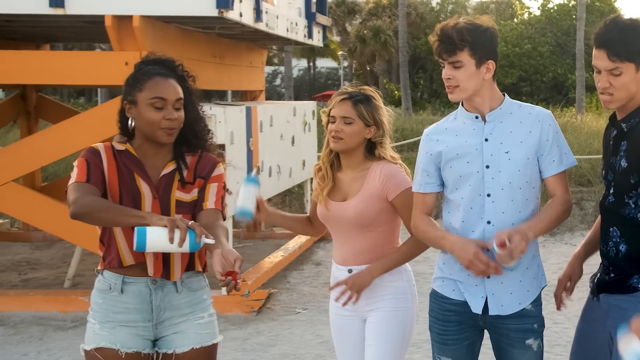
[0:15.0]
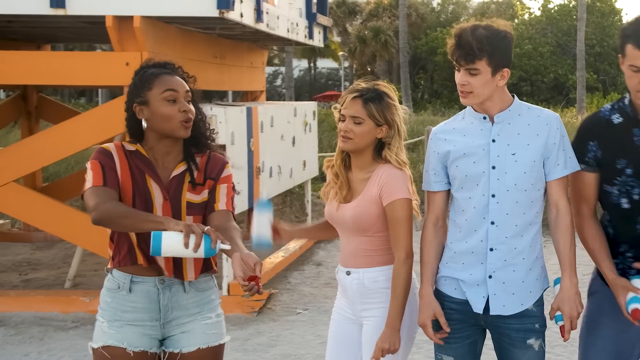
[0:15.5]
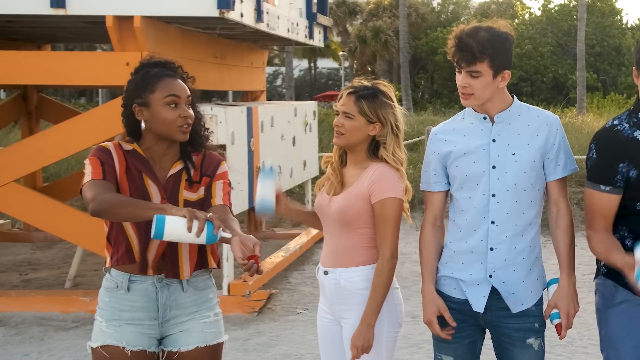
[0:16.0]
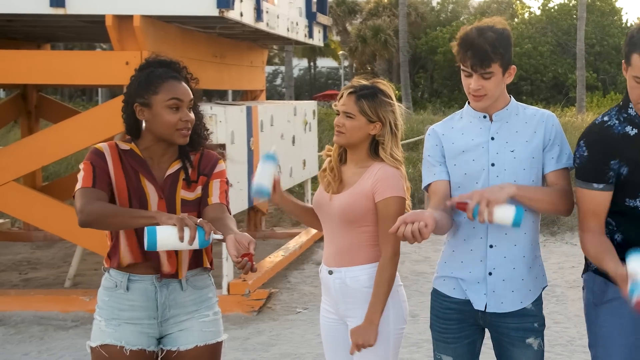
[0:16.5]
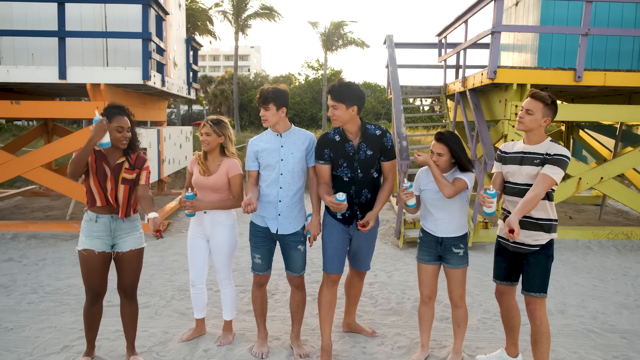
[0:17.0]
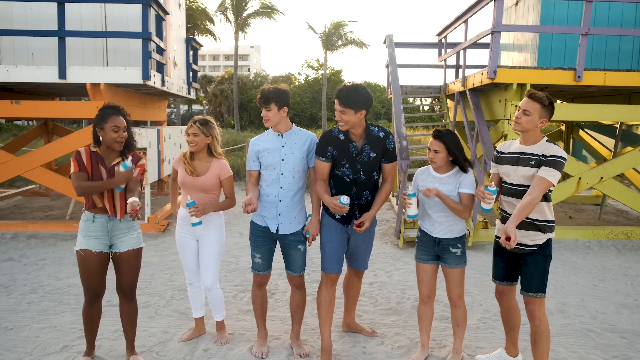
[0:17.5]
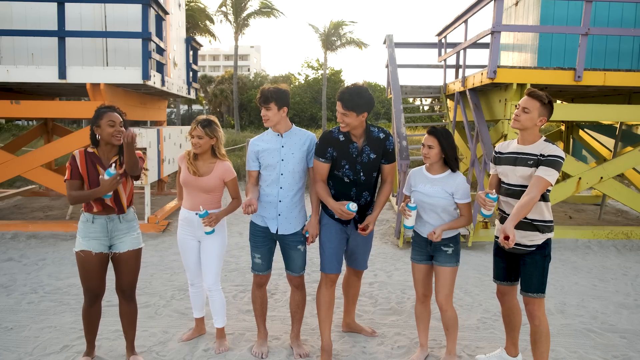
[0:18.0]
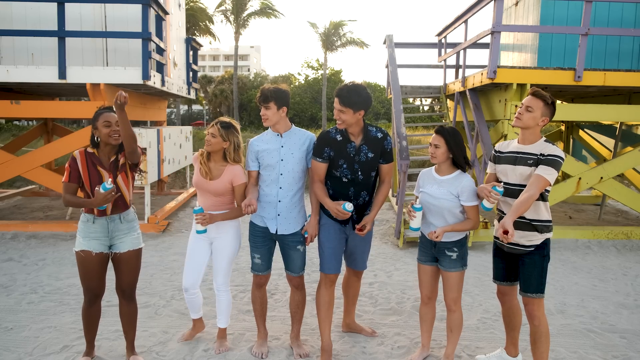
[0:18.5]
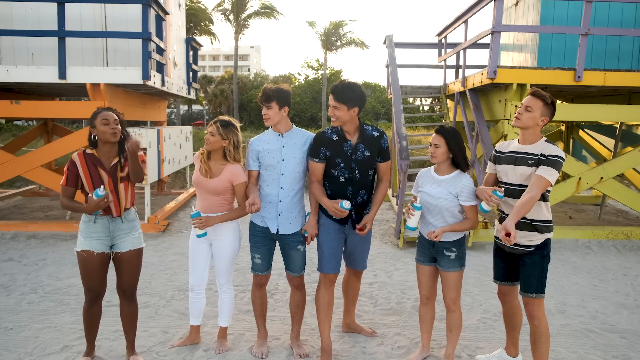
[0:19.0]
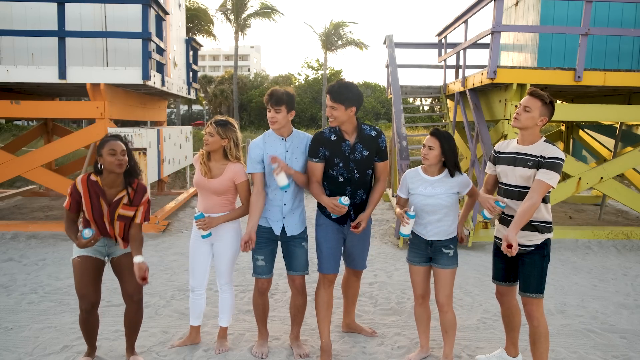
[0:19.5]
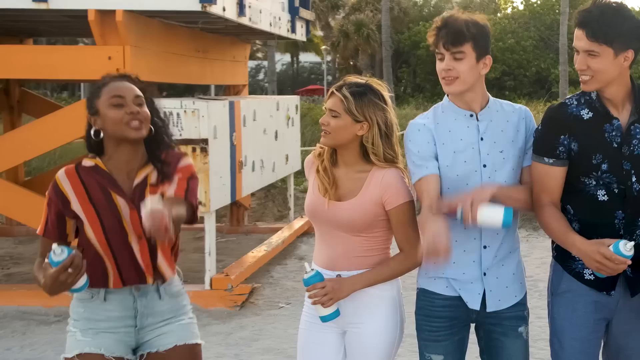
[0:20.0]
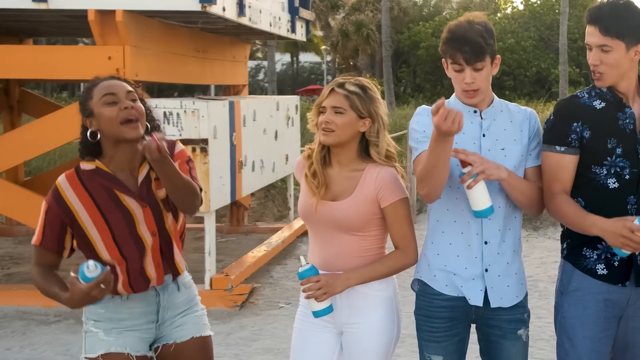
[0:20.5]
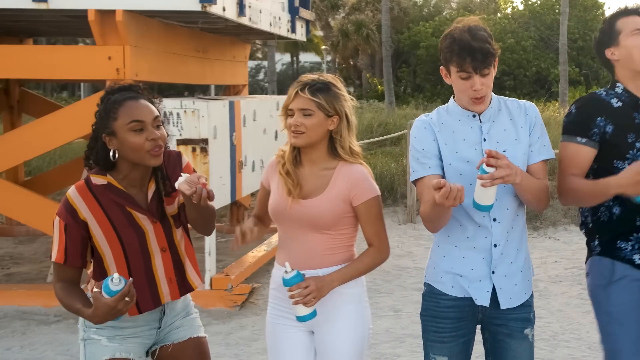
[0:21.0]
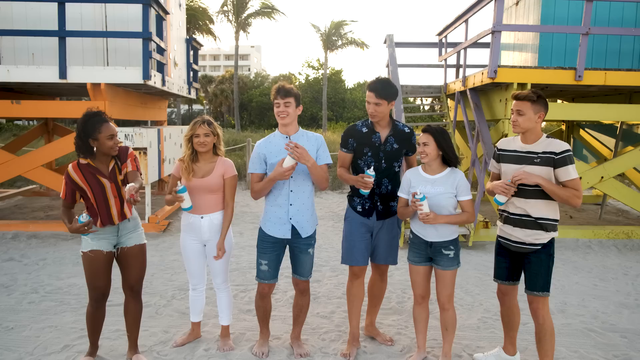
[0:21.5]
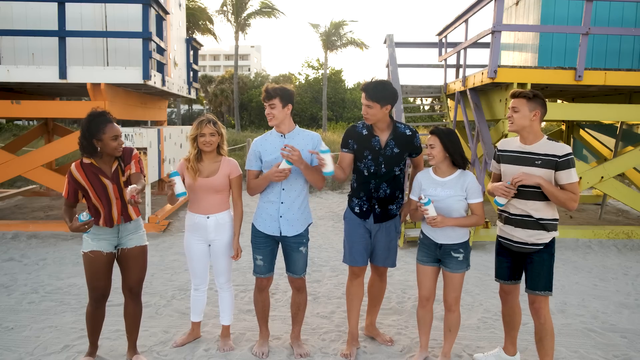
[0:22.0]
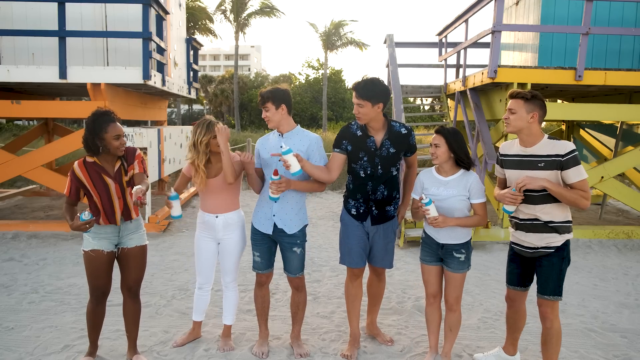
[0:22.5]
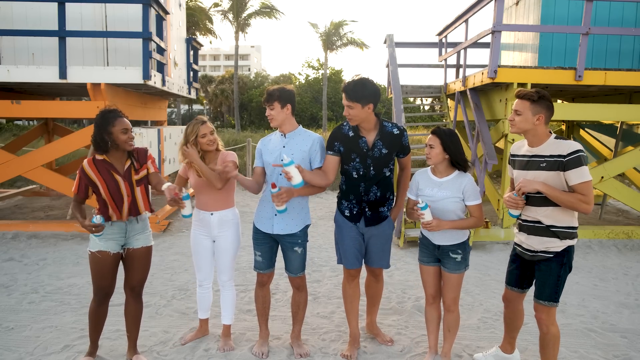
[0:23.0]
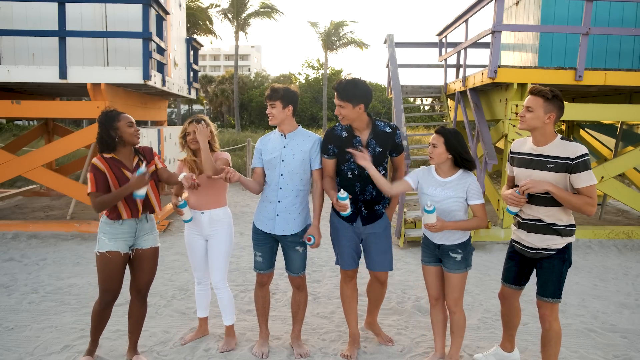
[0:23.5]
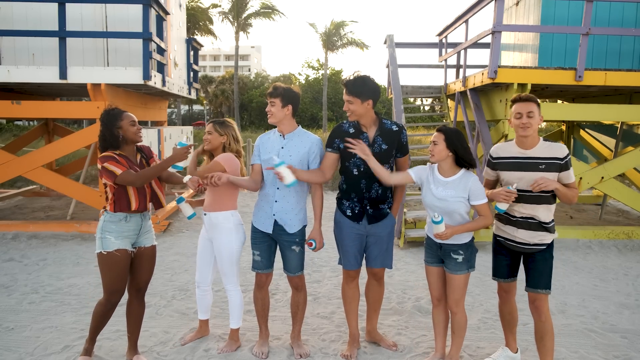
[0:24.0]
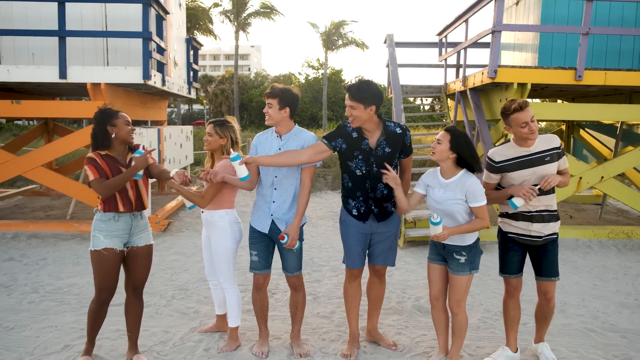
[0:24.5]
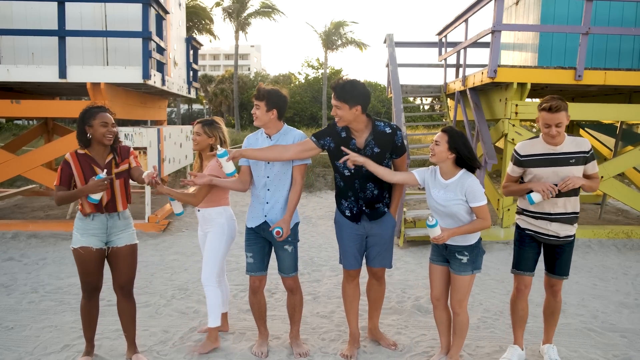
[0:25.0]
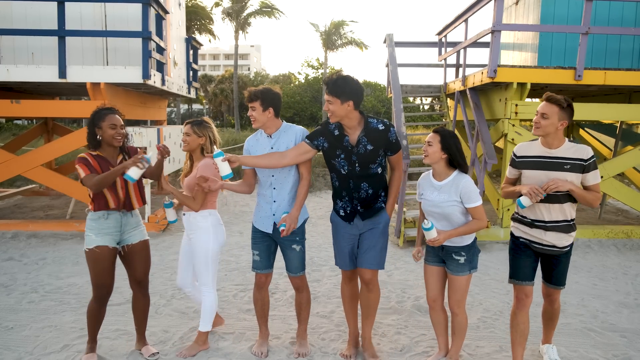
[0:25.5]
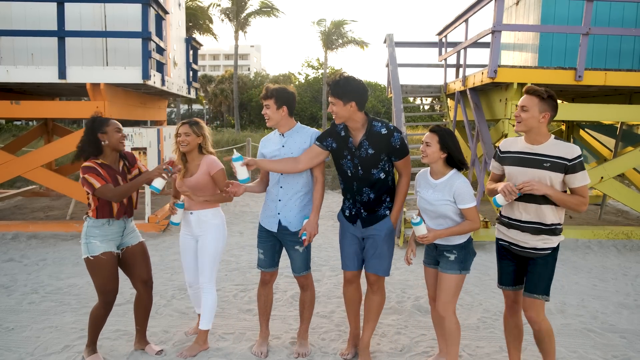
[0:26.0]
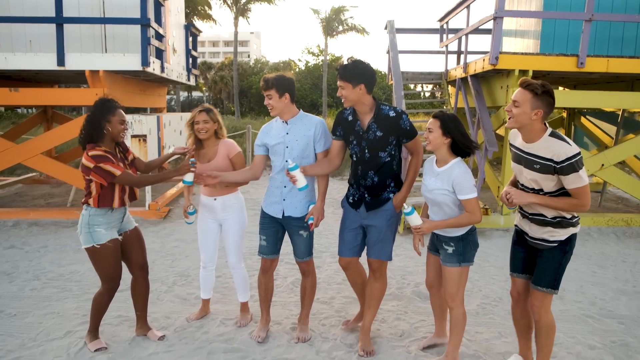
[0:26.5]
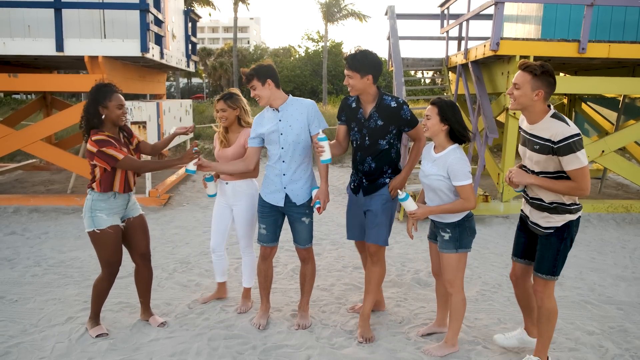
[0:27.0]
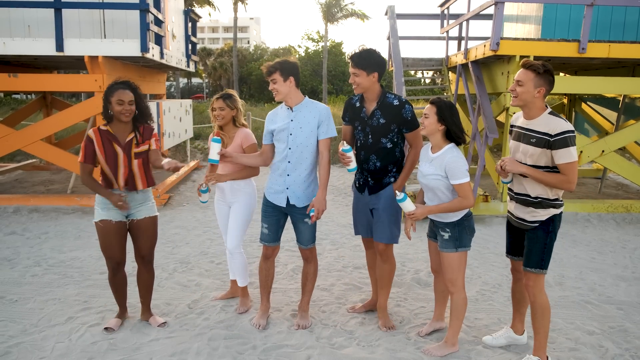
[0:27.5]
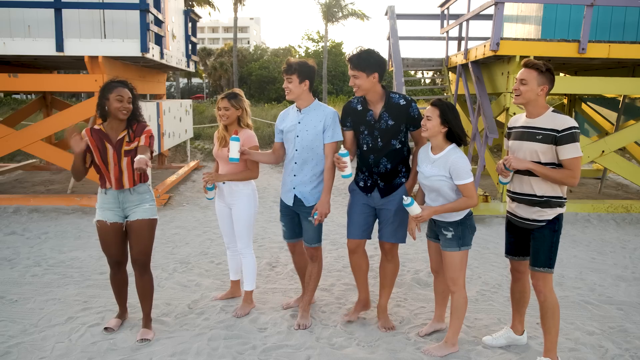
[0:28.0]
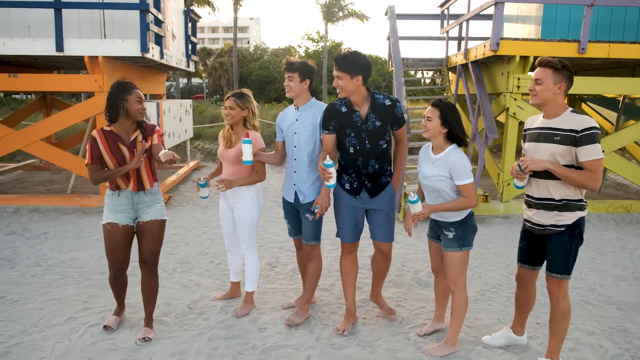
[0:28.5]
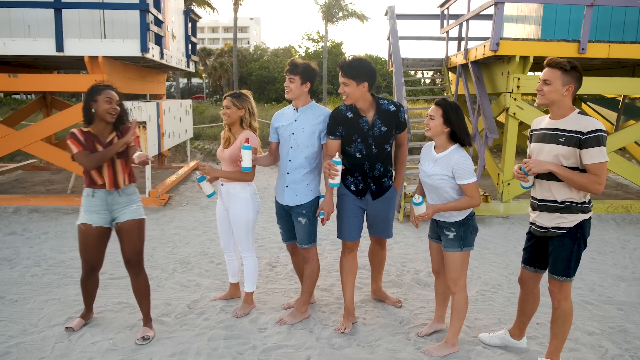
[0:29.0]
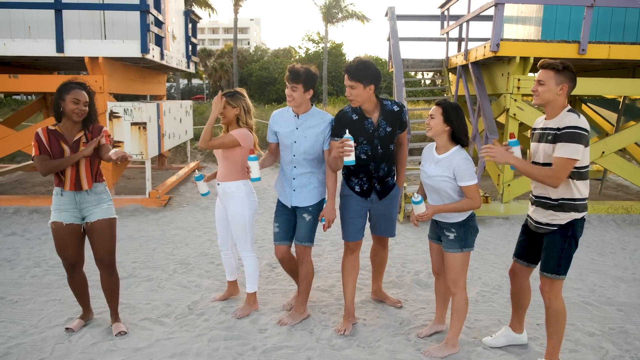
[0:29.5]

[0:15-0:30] Jojo shows the four participants how to do the whipped cream challenge. She puts some whipped cream on the inside of her left wrist and makes a motion with her arm moving up in the air, and she mouths the words "in your mouth" as she does this. The four participants watch her and sort of laugh because her arm movements are a little funny, and they point to her. At one point Jojo hands her can of whipped cream off to Hayes and prepares to show them how the challenge is done, while the others keep watching and laughing. Her co-host Damon is at the other end of the line of participants and is also sort of showing how to do the challenge: he puts his arm out as if to demonstrate putting whipped cream on the inside of the arm, but the whole time he is watching Jojo and letting her take the lead.